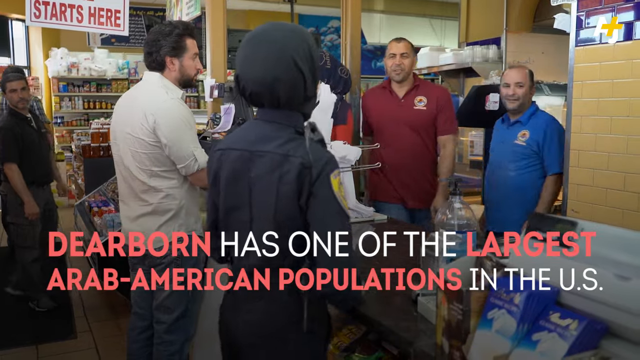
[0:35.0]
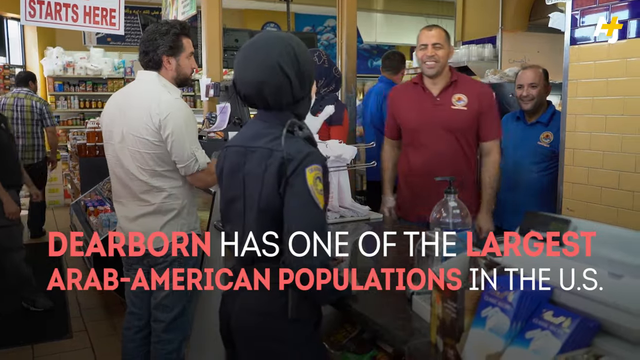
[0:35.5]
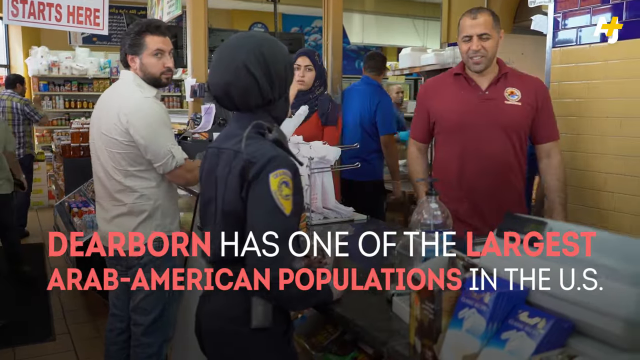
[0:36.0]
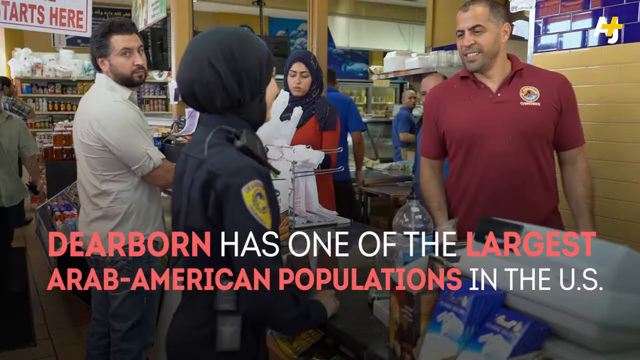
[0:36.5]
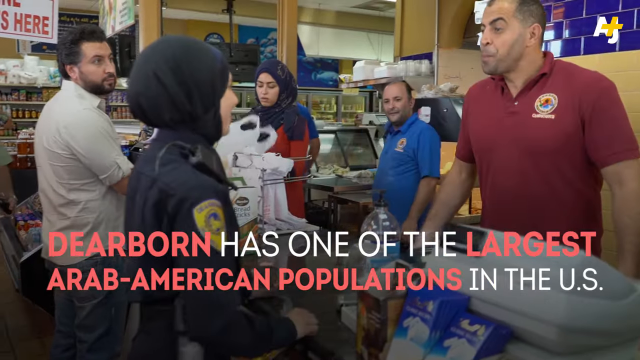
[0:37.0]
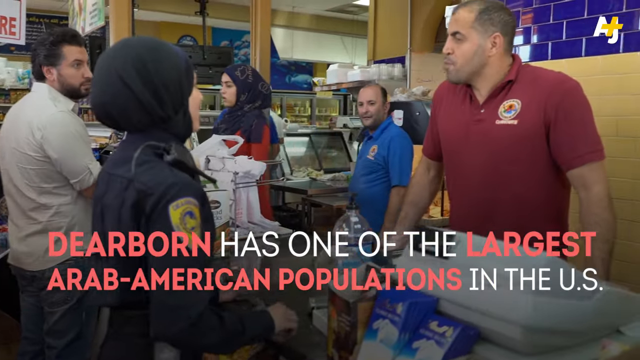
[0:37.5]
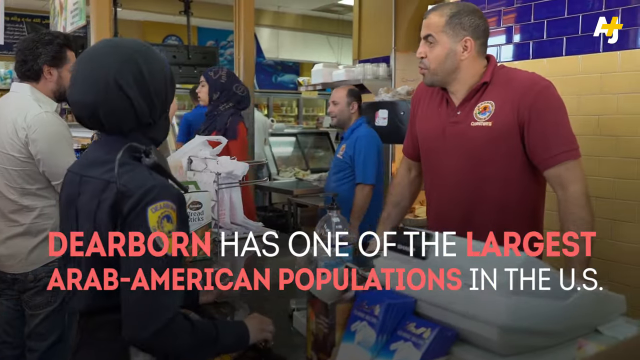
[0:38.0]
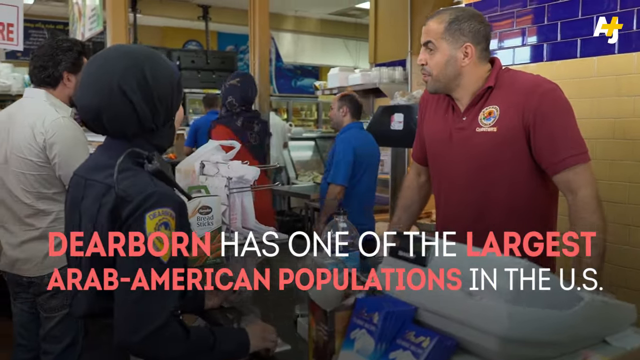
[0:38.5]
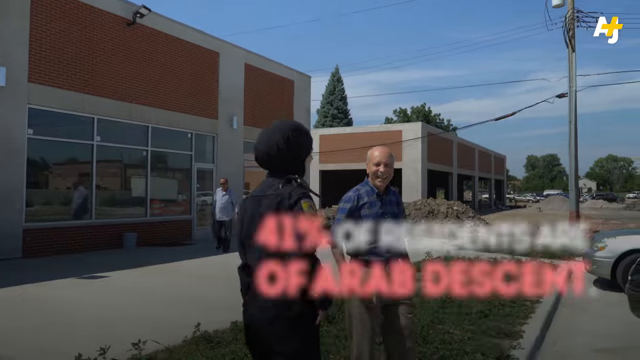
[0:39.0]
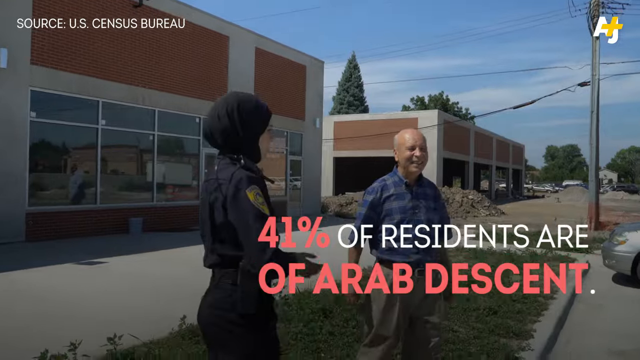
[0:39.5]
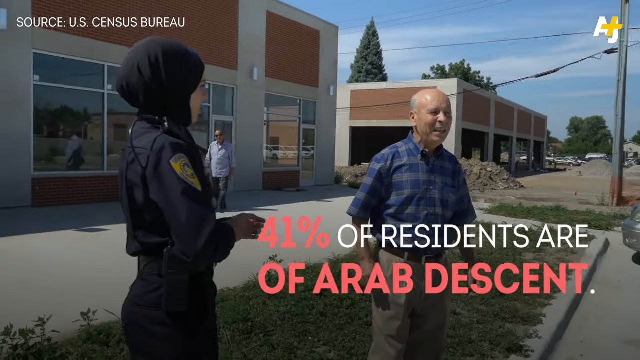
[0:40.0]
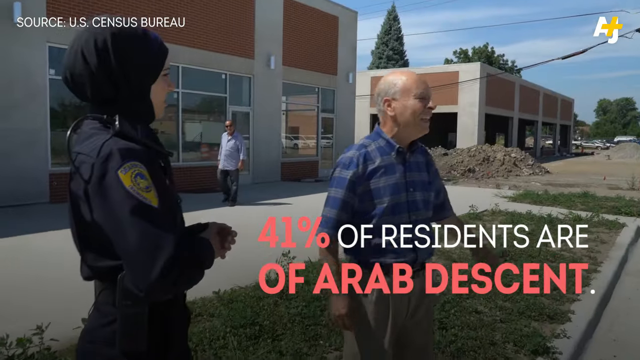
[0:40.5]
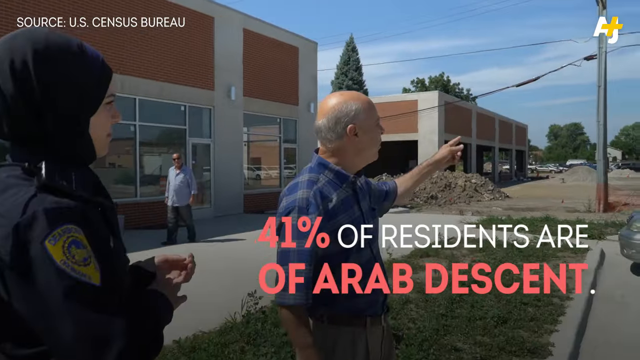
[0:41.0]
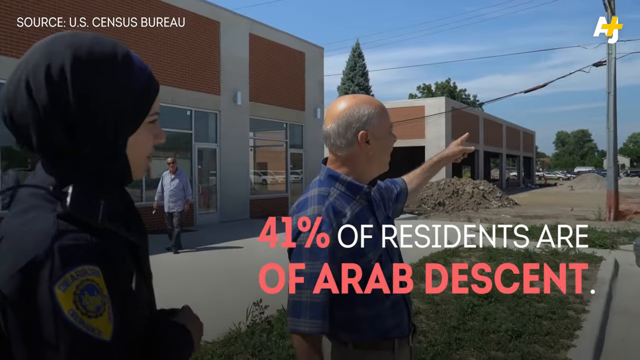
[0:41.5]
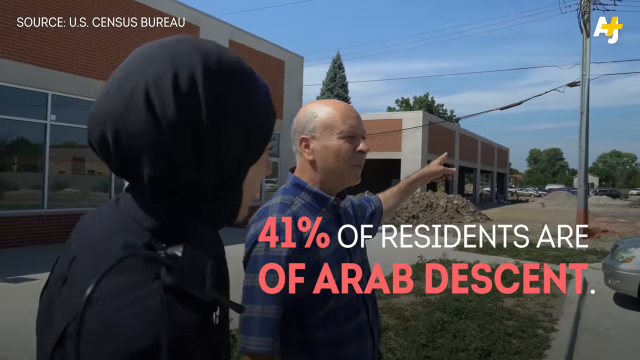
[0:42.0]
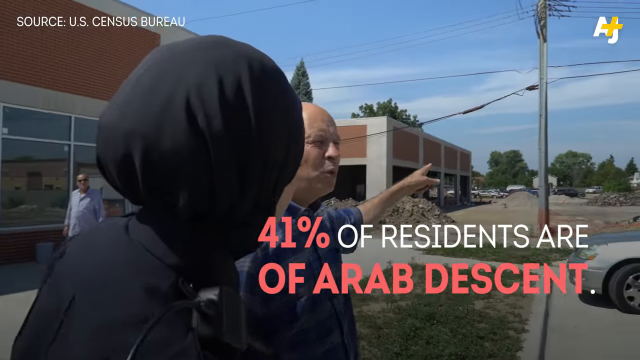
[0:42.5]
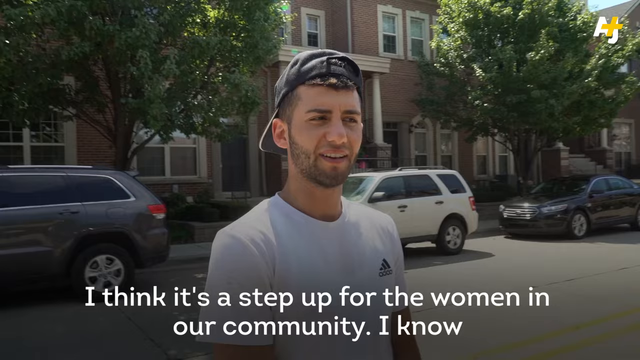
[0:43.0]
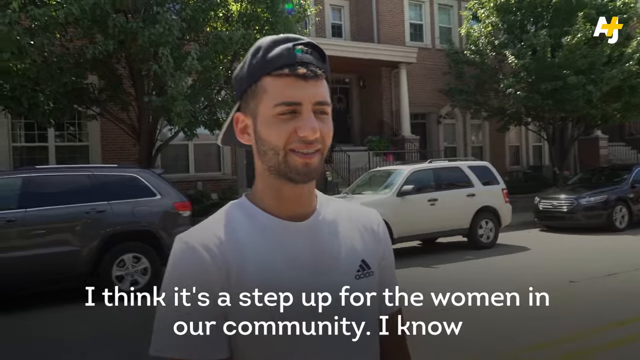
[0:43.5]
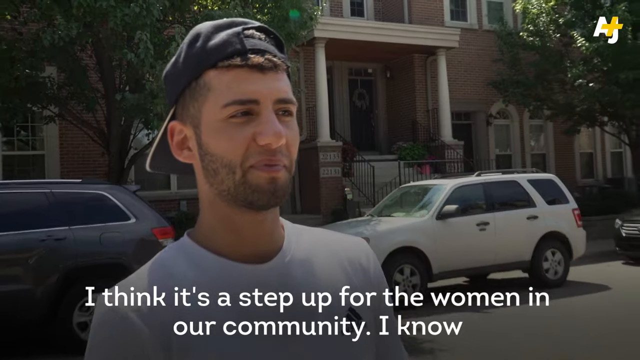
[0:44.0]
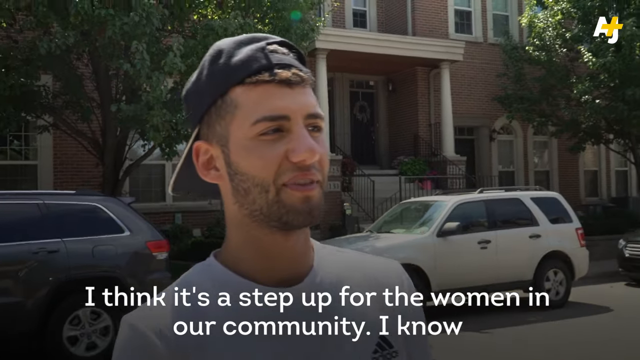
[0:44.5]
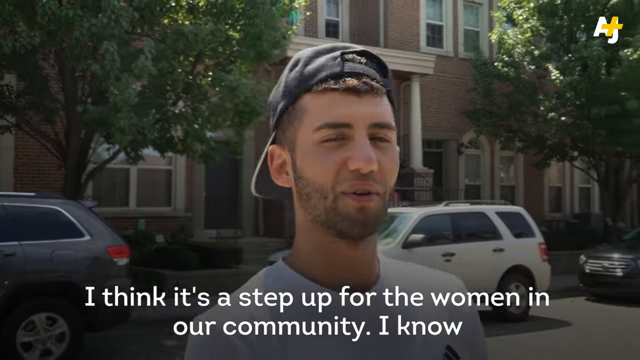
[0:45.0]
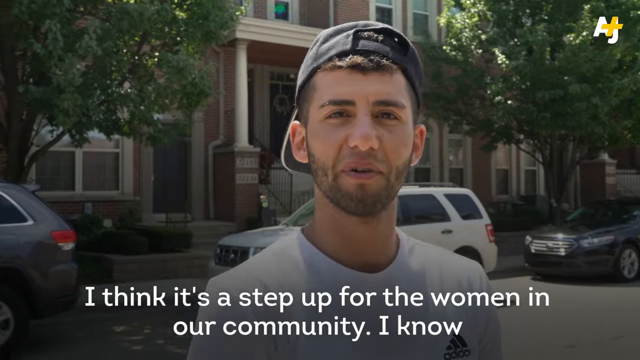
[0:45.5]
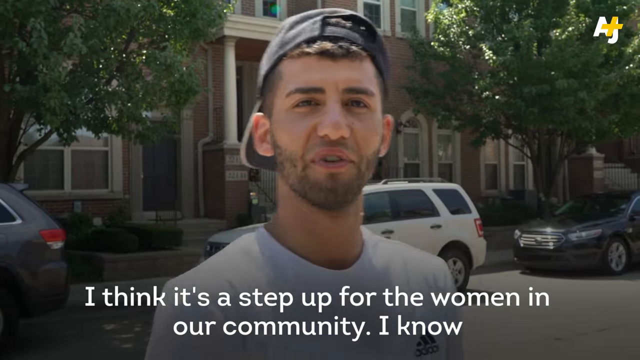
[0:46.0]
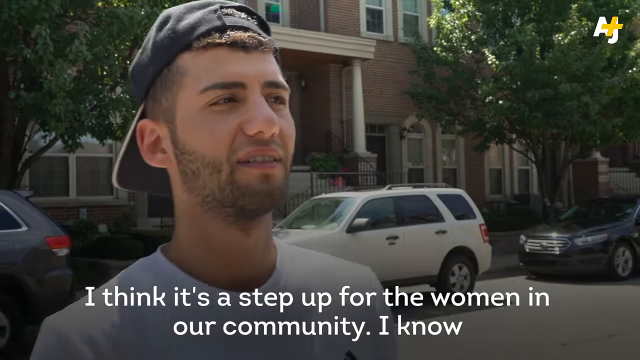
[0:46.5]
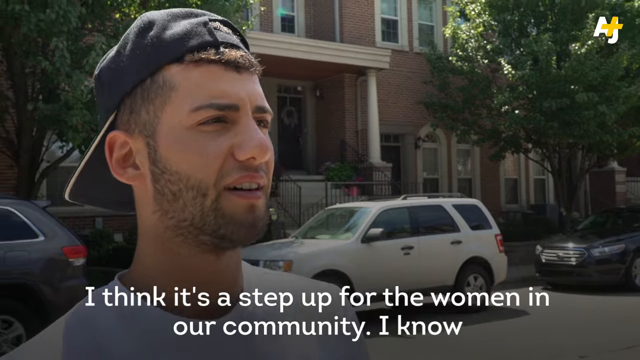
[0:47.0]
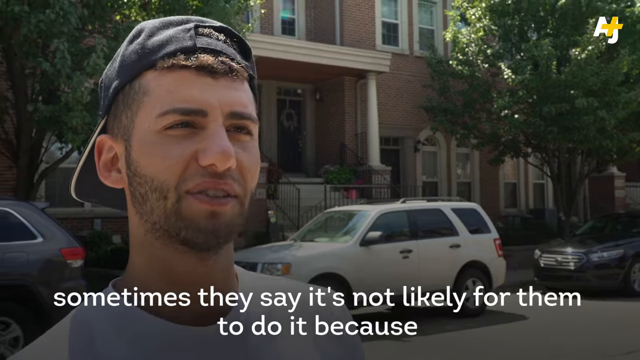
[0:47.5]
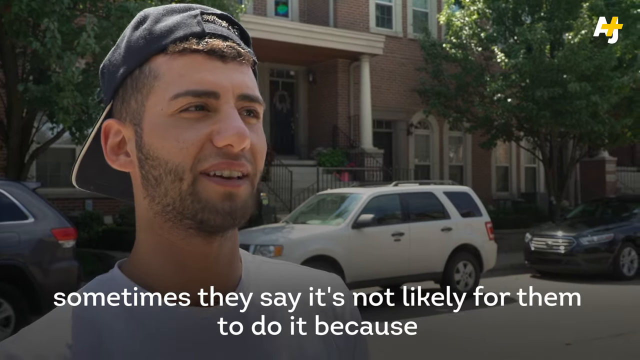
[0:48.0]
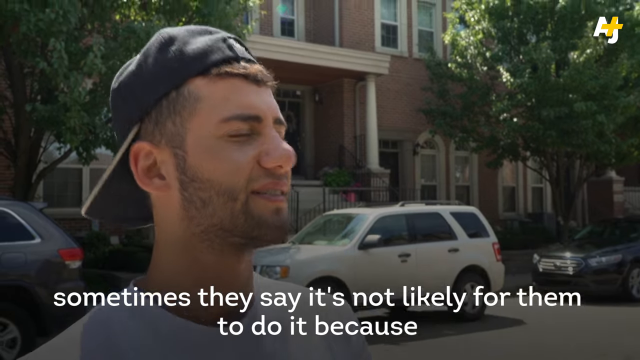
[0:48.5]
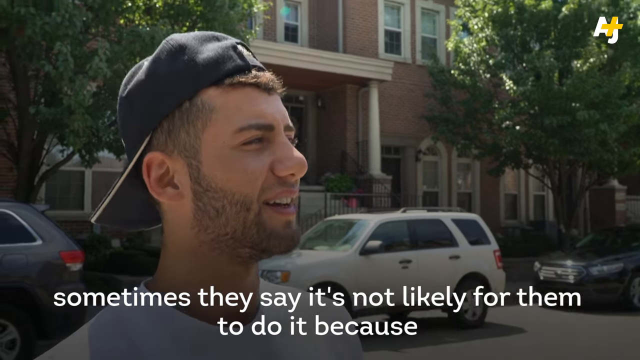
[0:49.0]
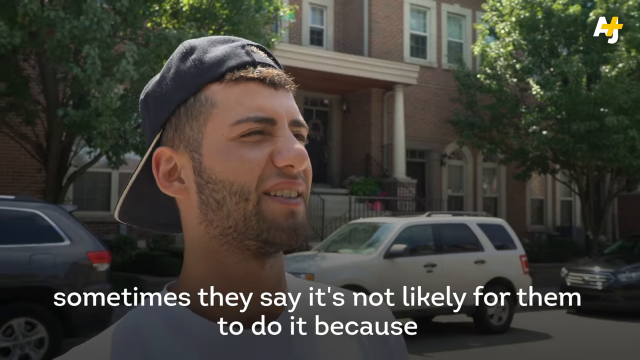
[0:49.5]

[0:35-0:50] Text states "Dearborn has one of the largest Arab American populations in the US" while she talks to a man in a red shirt standing behind a counter. The text "41% of residents are of Arab descent" appears while she talks to an older man in a blue shirt and khakis. Multiple shots show Amal interacting with her community, ranging from inside stores to outdoors. Another apparent Arab community member, a younger-looking man in a backwards hat and a white t-shirt, says it is great for the women in their community and good to see somebody like Amal in a position of power, and that it is not common for women in their community to do what Amal is doing.